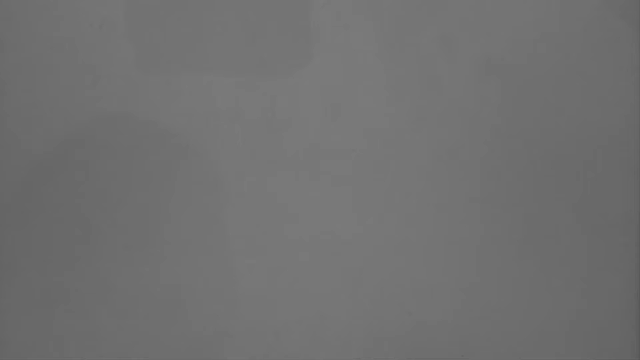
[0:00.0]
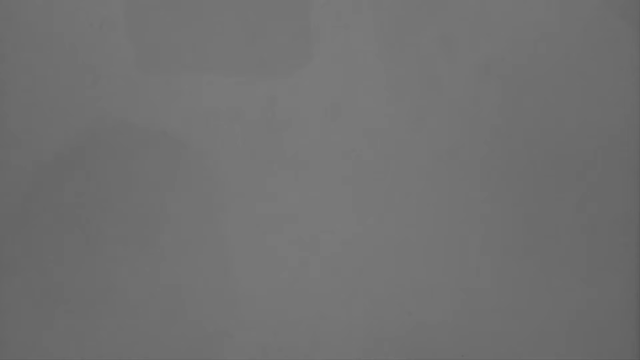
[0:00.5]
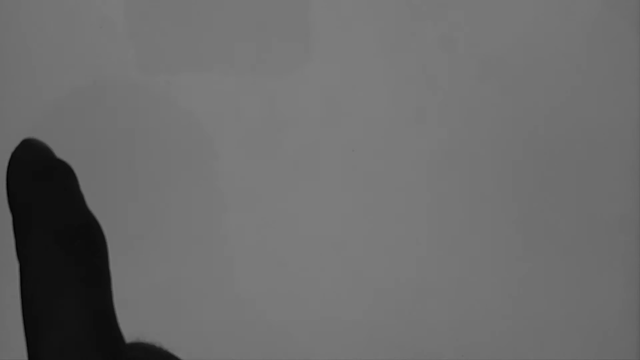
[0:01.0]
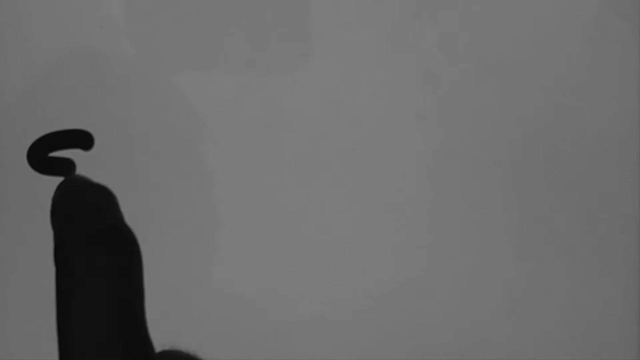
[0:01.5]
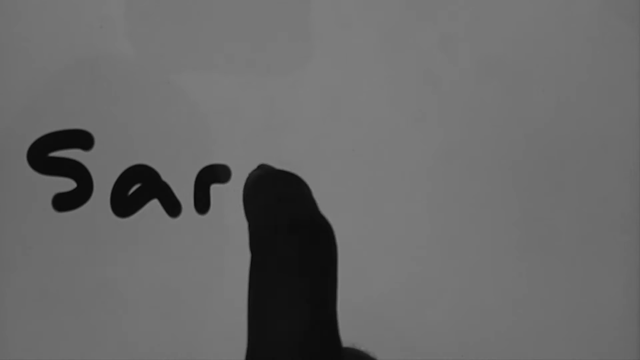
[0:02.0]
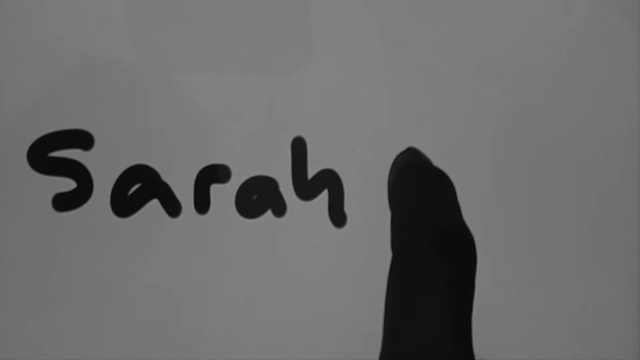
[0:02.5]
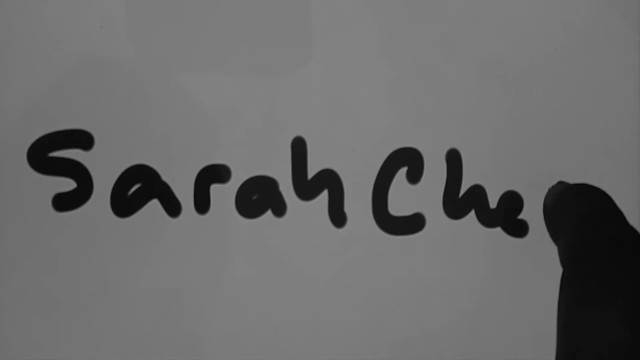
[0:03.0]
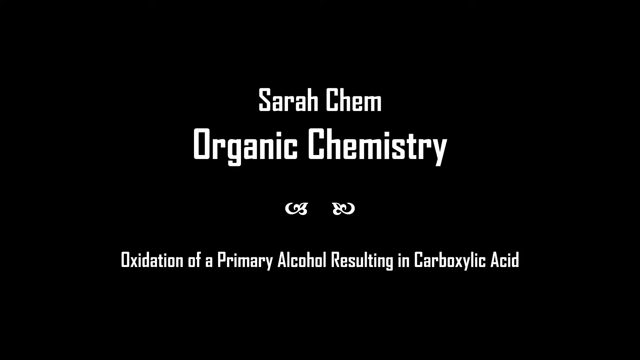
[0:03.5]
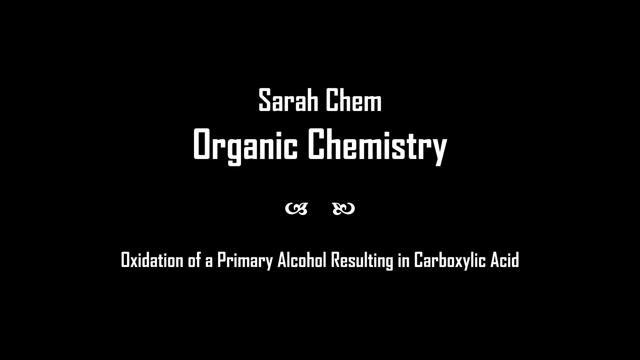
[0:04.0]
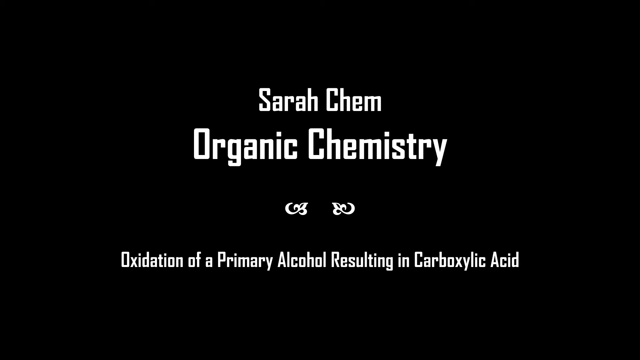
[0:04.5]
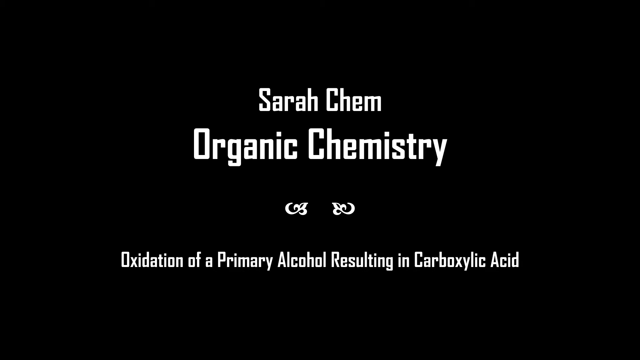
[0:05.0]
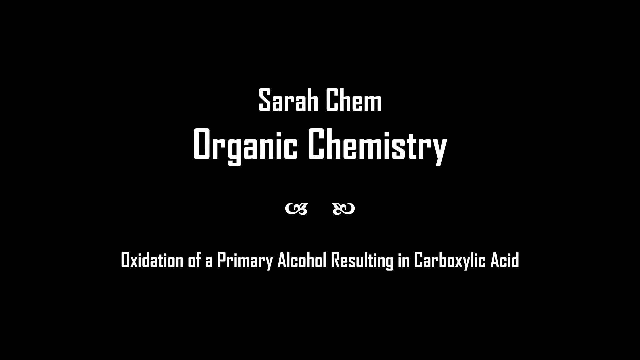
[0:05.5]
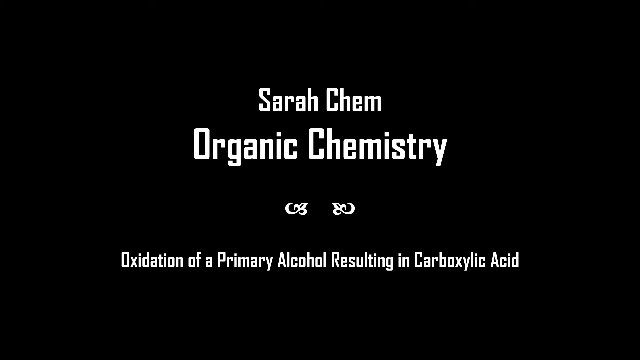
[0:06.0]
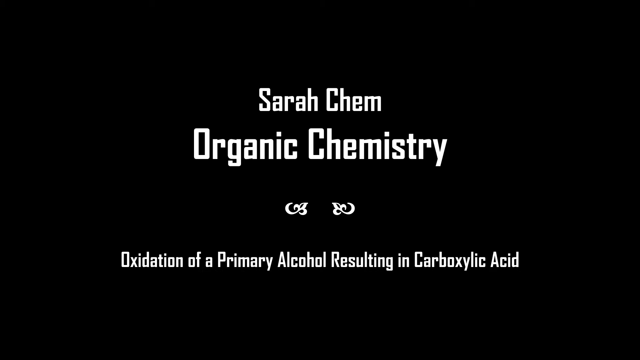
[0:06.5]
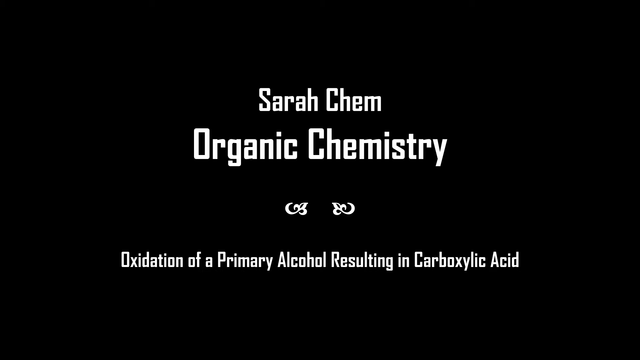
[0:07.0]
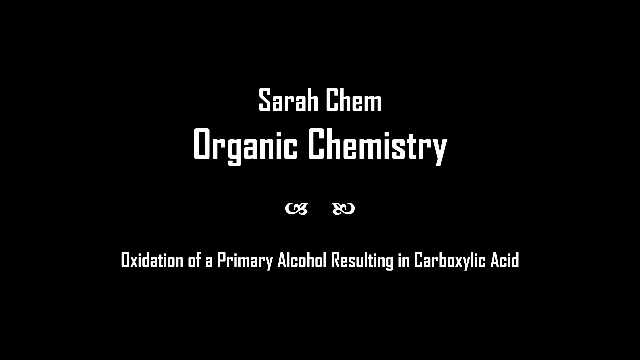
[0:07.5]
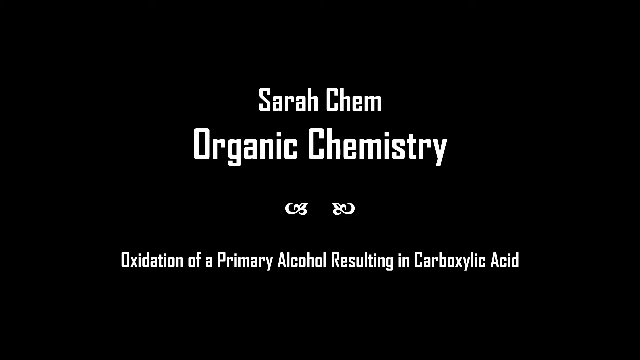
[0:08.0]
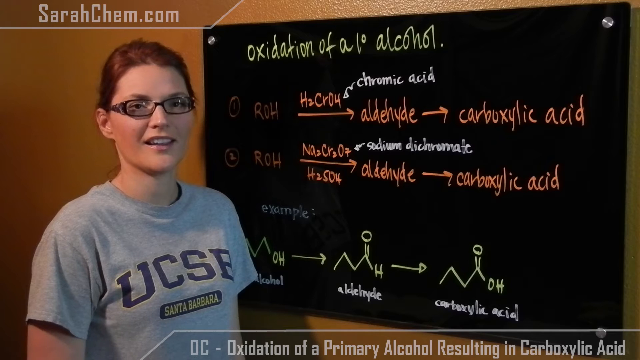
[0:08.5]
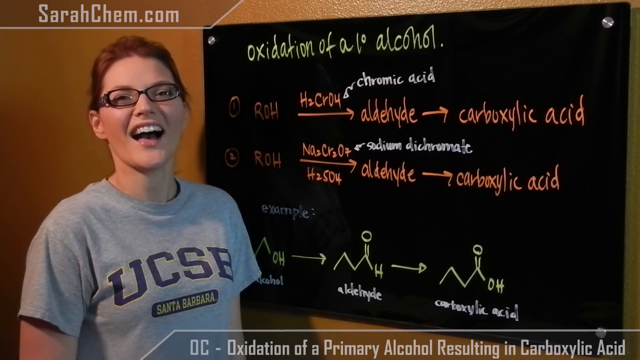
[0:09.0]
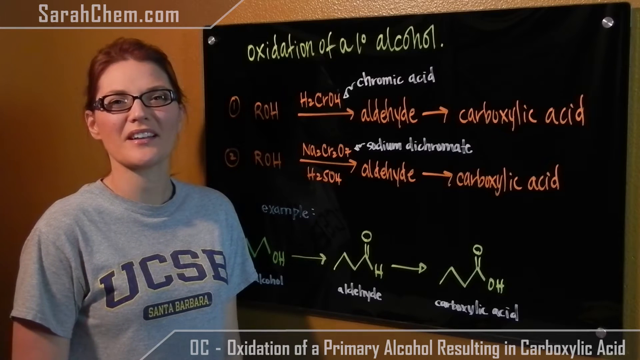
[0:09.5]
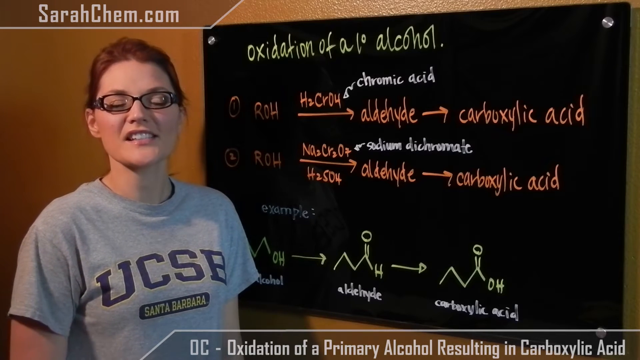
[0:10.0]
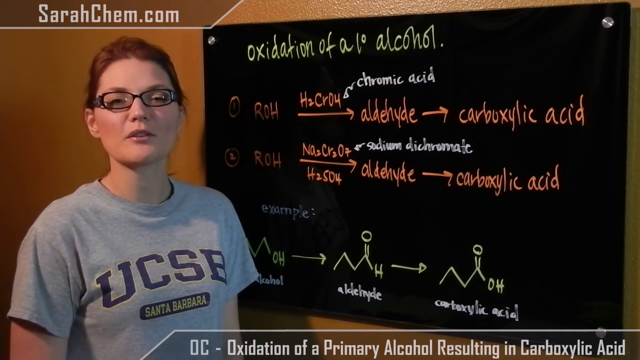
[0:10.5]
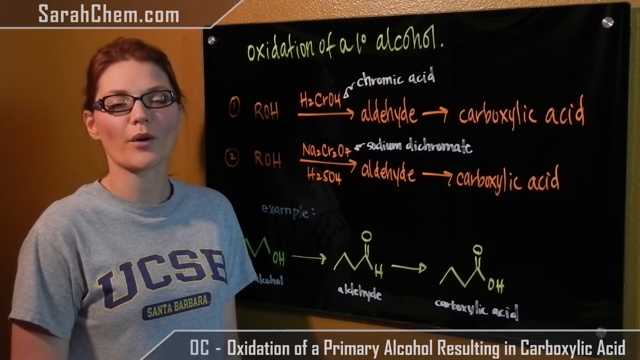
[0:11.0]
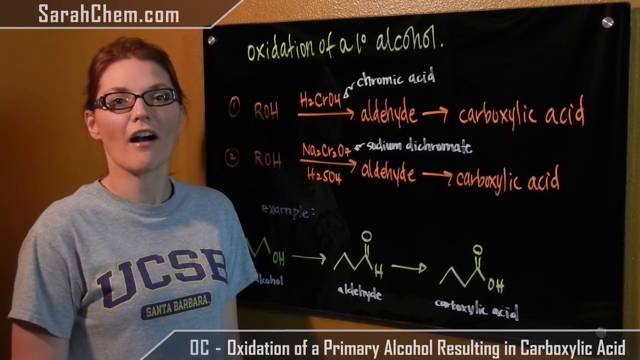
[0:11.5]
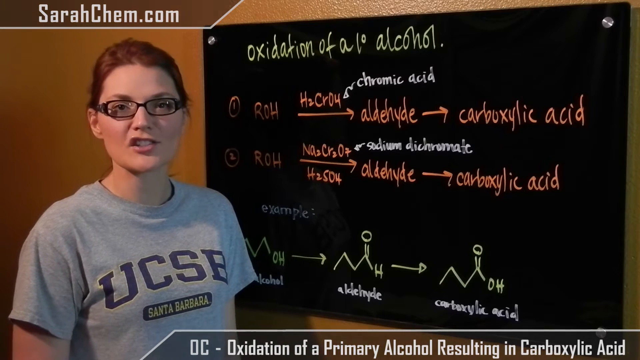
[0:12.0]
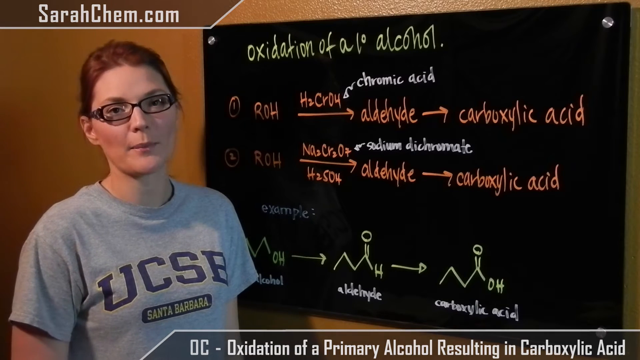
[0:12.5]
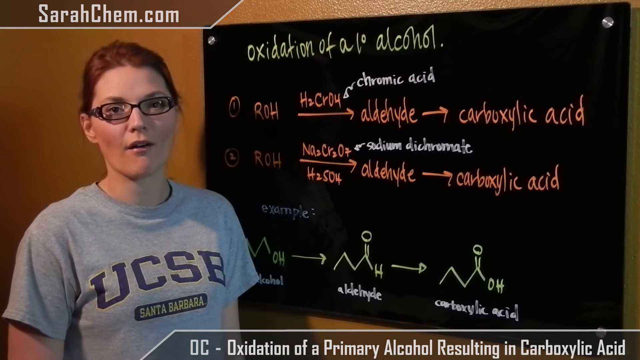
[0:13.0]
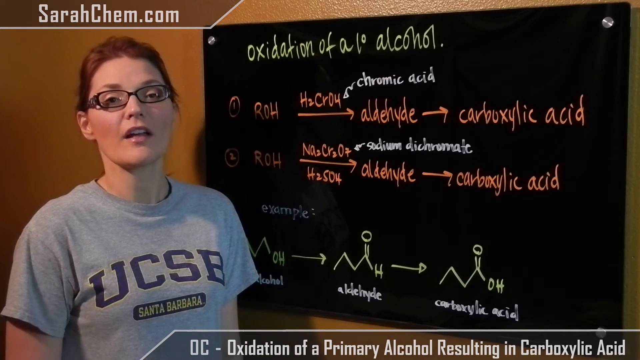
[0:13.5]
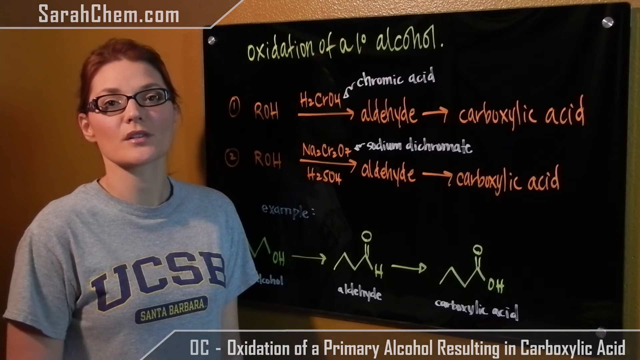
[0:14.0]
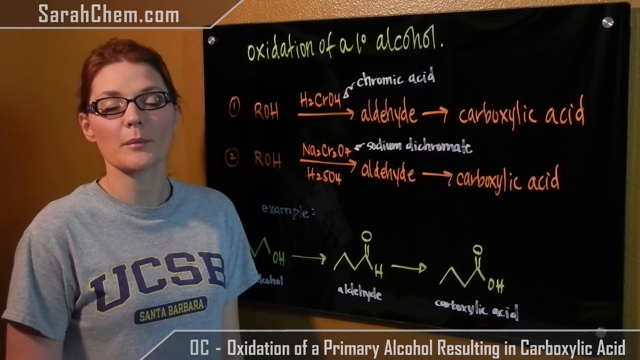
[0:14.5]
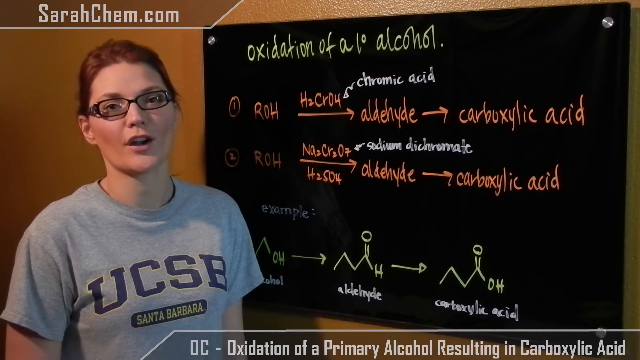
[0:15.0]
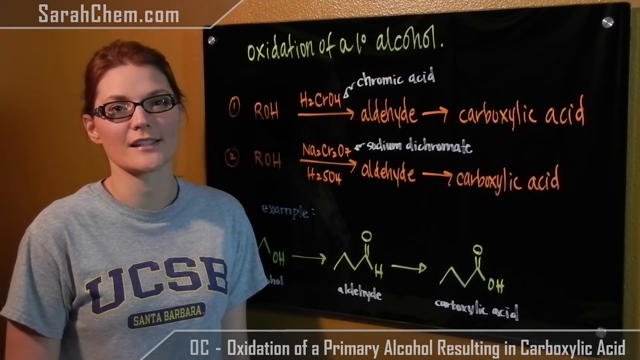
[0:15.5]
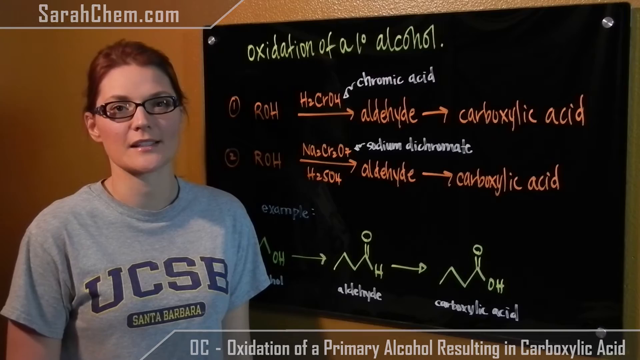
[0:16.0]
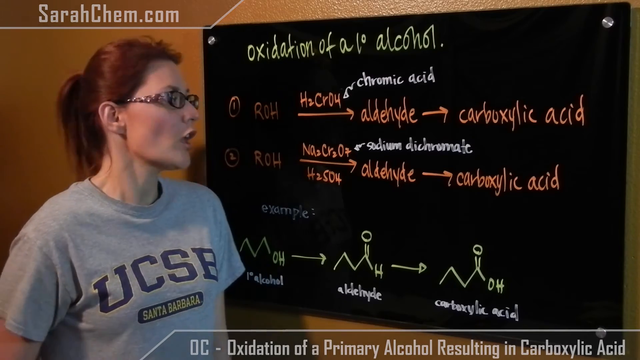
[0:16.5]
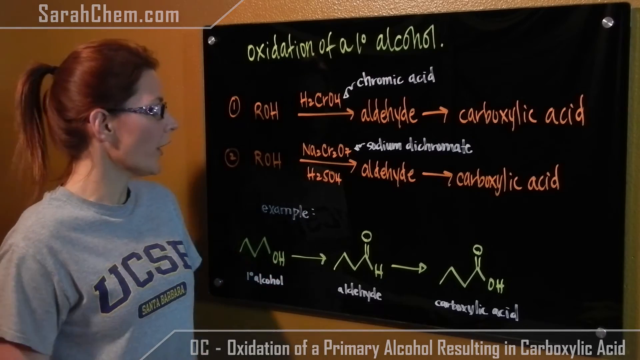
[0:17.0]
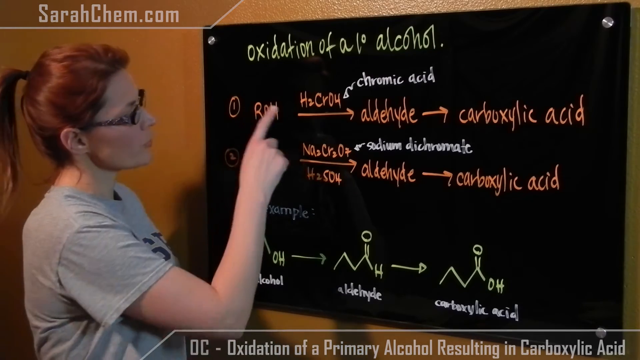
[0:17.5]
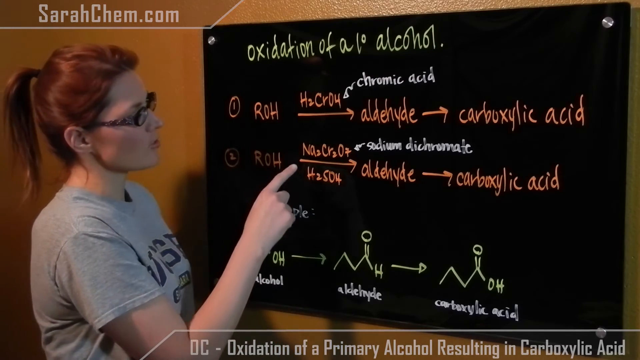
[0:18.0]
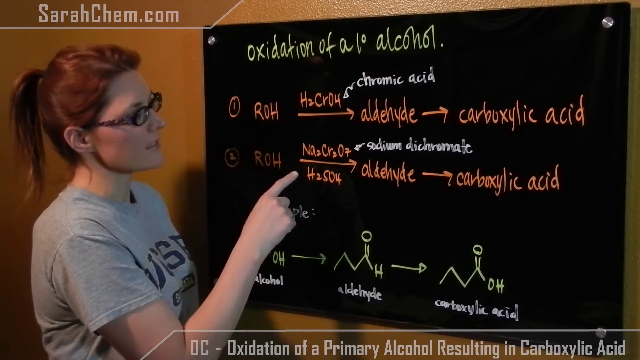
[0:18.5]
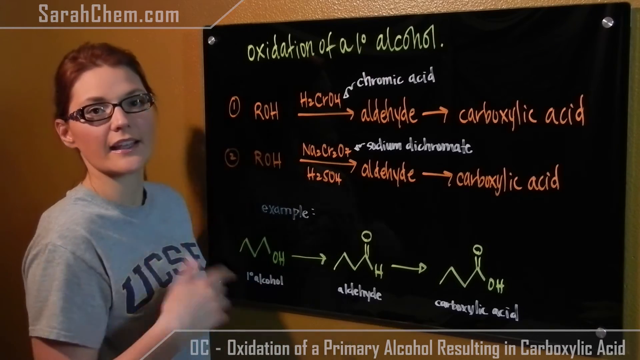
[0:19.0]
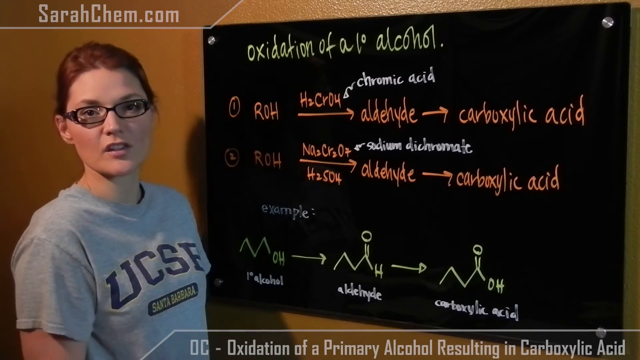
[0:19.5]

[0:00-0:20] A grey background appears, and a hand writes "Sarah Kem" in black on it. Then the text "Sarah Kem, organic chemistry, oxidation of a primary alcohol resulting in carboxylic acid" appears. Sarah Kem then appears, with "sarahkem.com" at the top left. She wears a grey t-shirt and glasses, and there is a blackboard with "oxidation of alcohol" written on it. The board shows a chemistry formula going from OH to aldehyde to carboxylic acid, with ROH and an arrow pointing to aldehyde, then carboxylic acid. Sarah is talking on the right side, and the blackboard is on the right. Along the arrow from ROH to aldehyde is H2CrO4, chromic acid; for number 2, ROH to aldehyde, there is Na2Cr2O7, sodium dichromate, with H2SO4 below the arrow. The board also shows alcohol, OH, aldehyde, a symbol, and carboxylic acid.